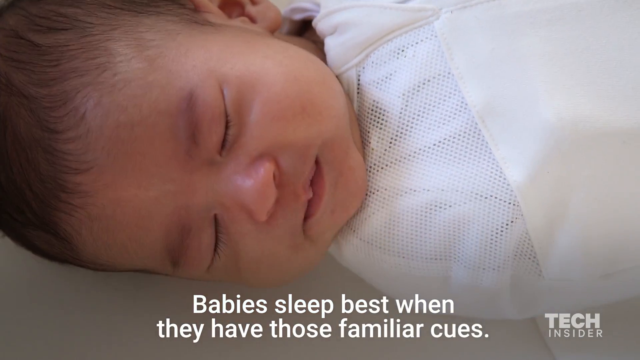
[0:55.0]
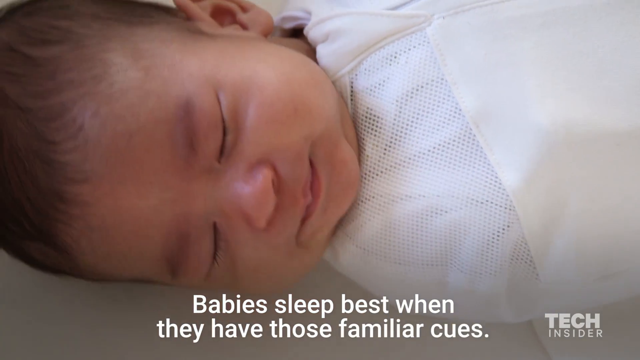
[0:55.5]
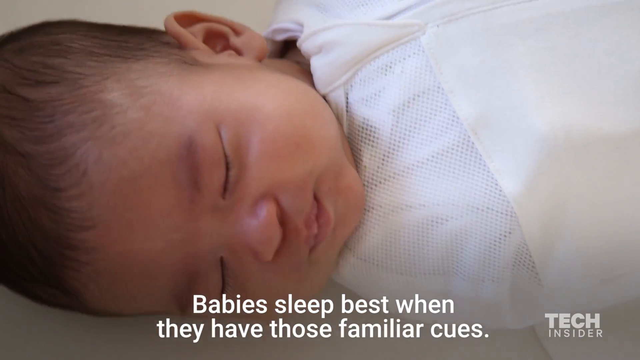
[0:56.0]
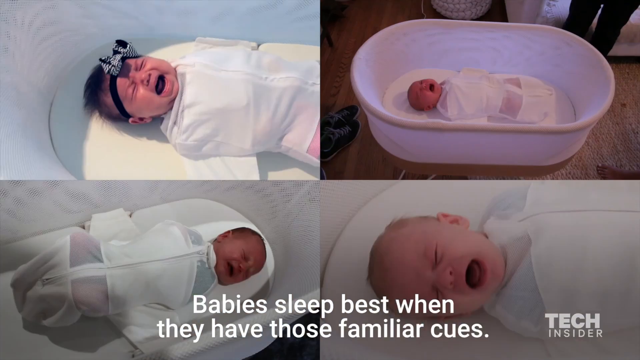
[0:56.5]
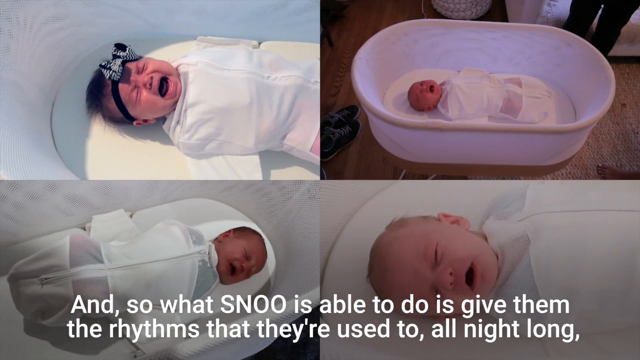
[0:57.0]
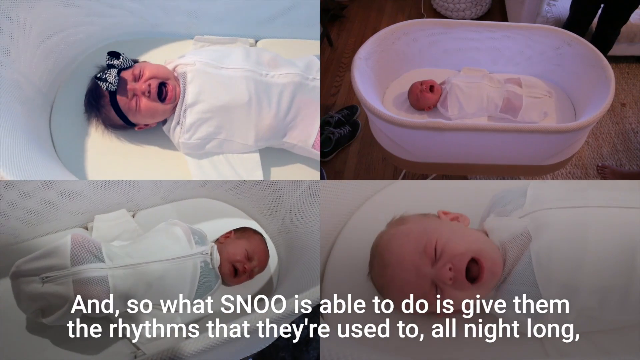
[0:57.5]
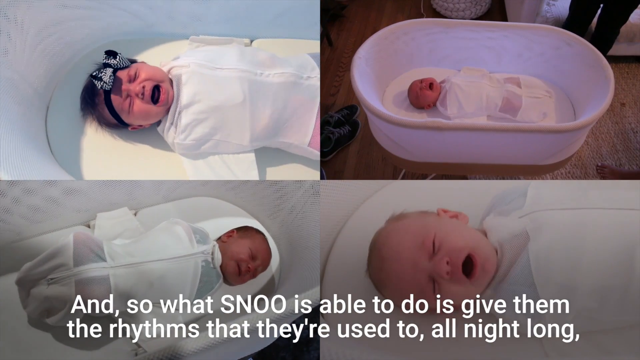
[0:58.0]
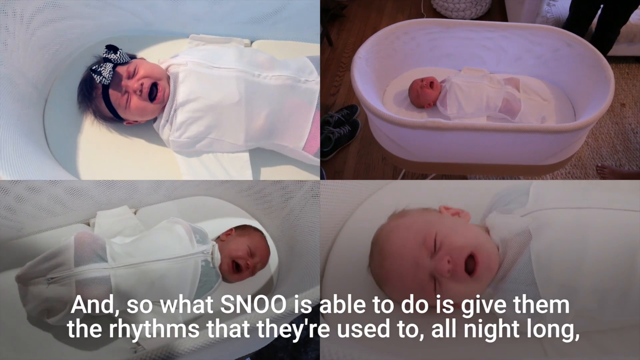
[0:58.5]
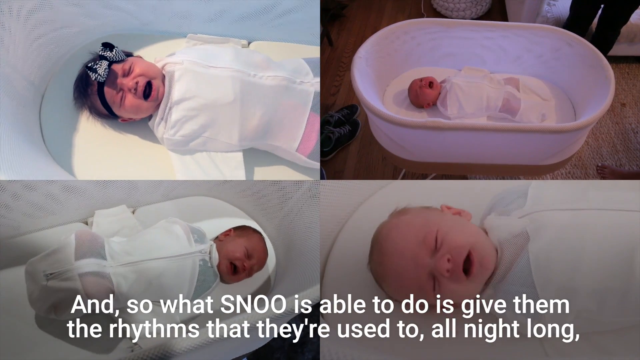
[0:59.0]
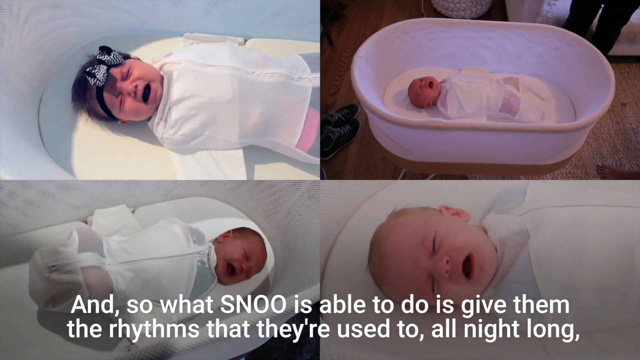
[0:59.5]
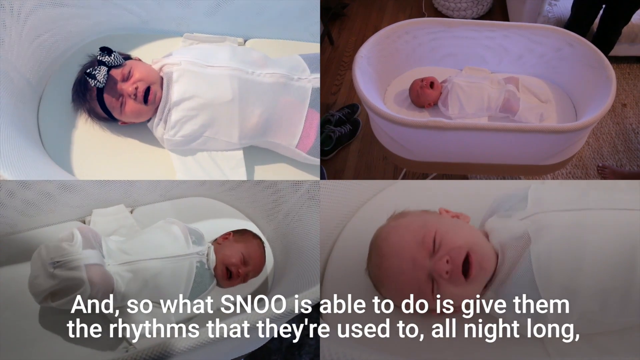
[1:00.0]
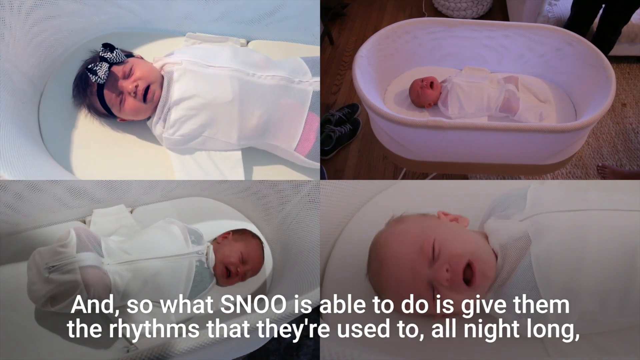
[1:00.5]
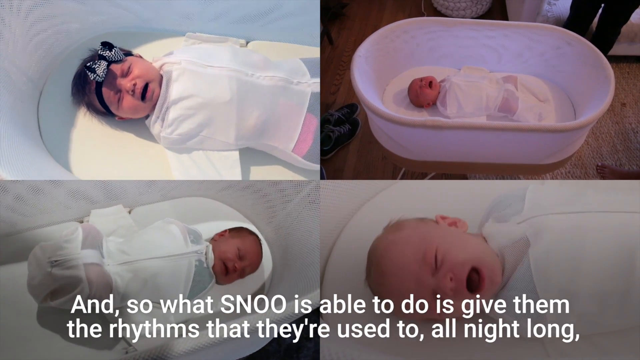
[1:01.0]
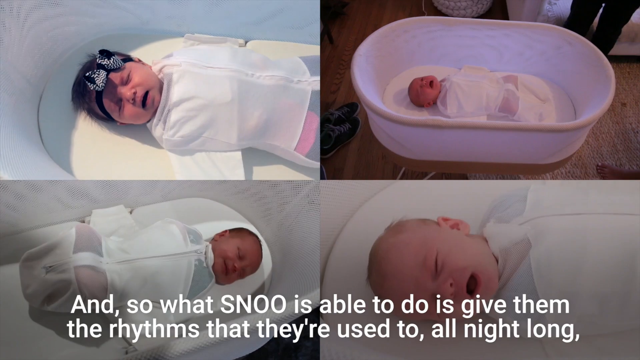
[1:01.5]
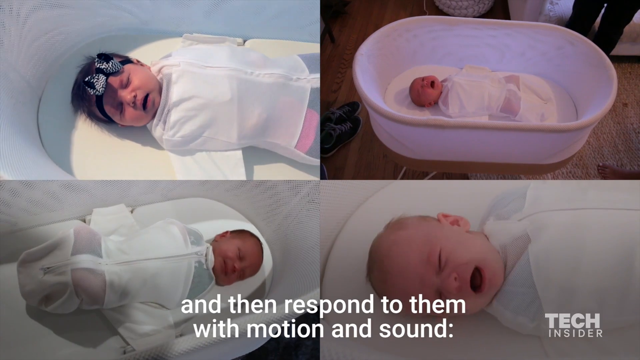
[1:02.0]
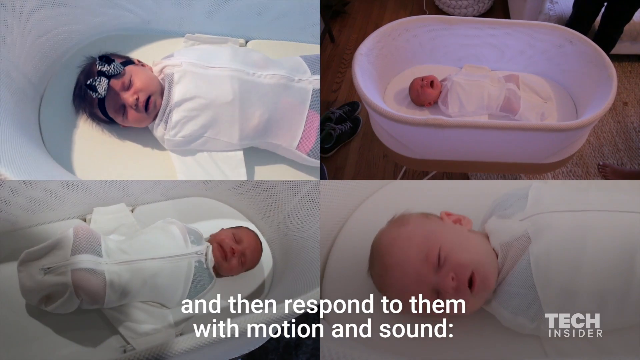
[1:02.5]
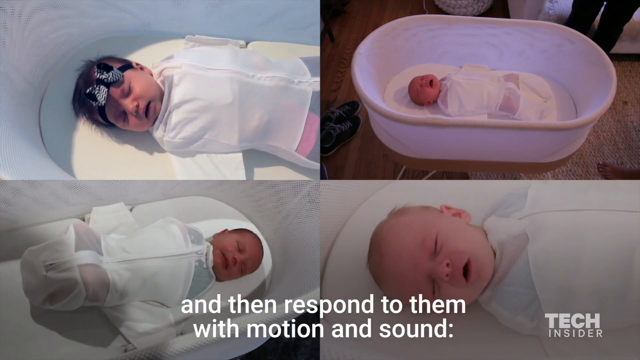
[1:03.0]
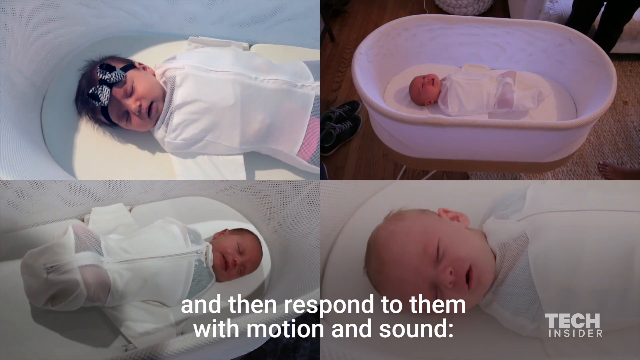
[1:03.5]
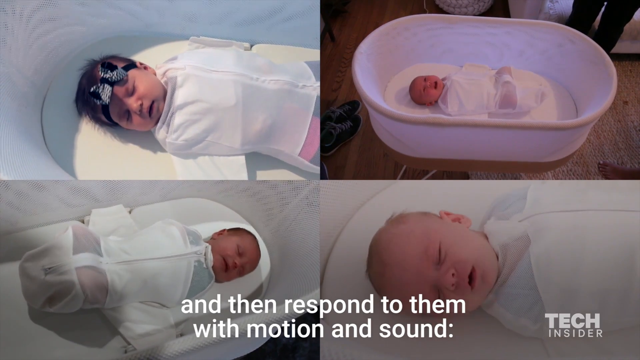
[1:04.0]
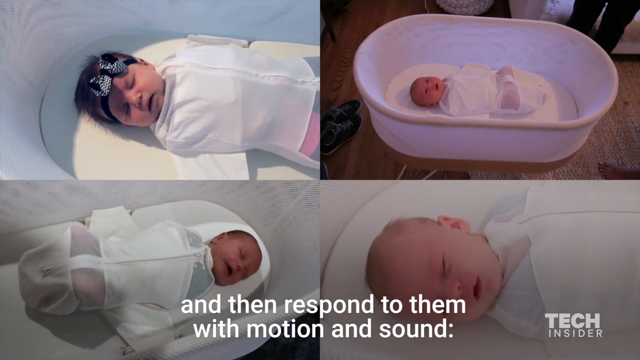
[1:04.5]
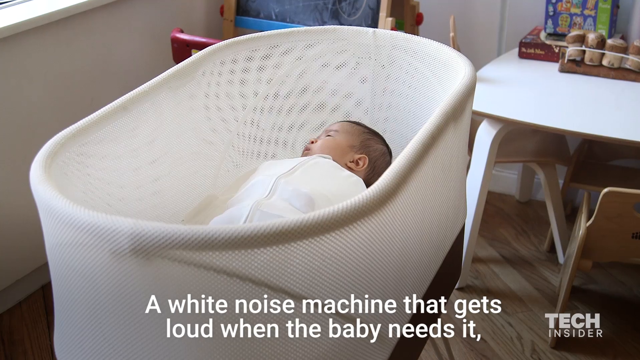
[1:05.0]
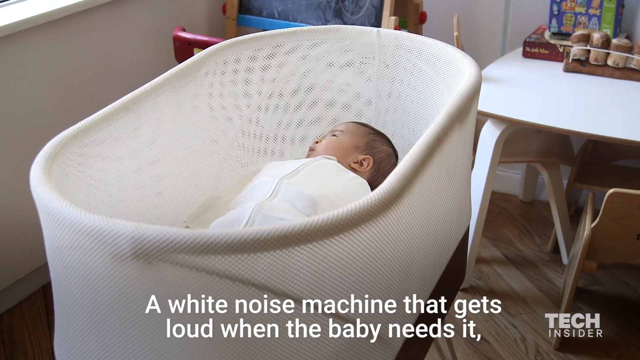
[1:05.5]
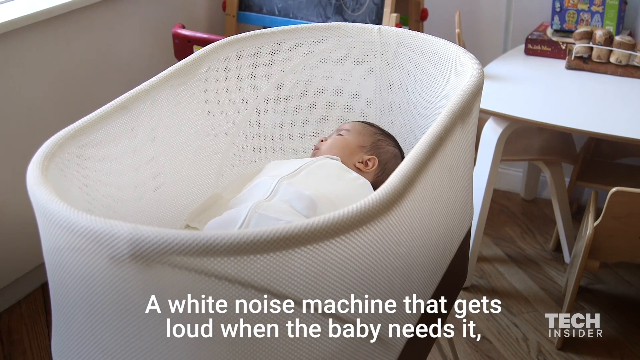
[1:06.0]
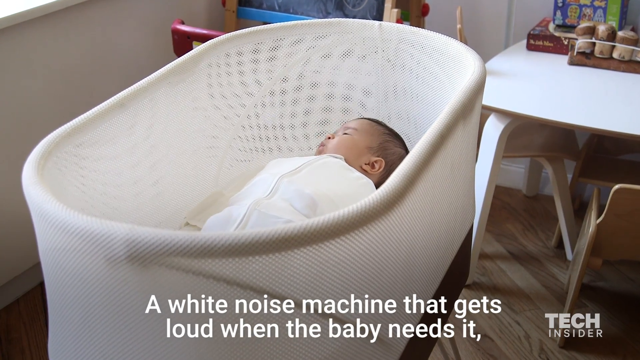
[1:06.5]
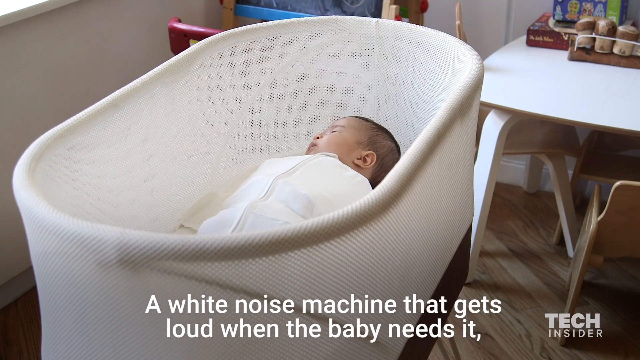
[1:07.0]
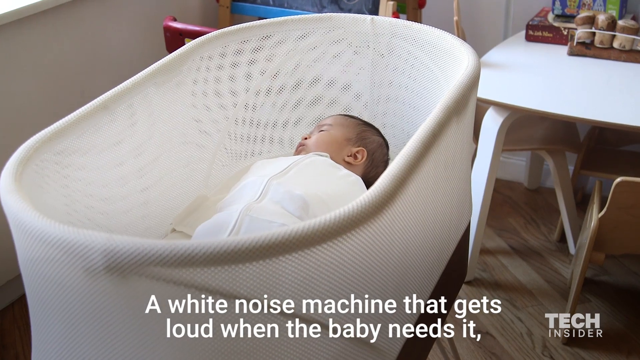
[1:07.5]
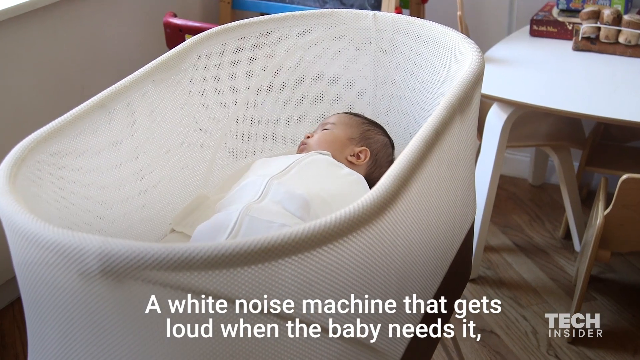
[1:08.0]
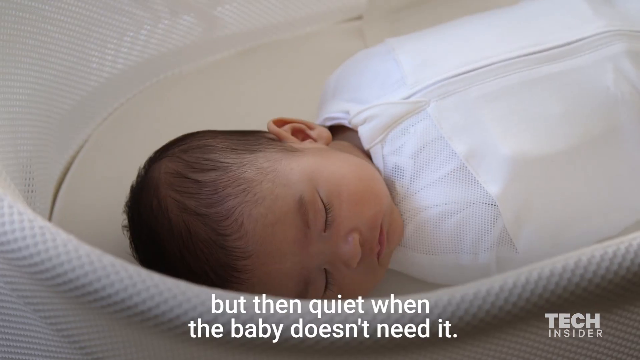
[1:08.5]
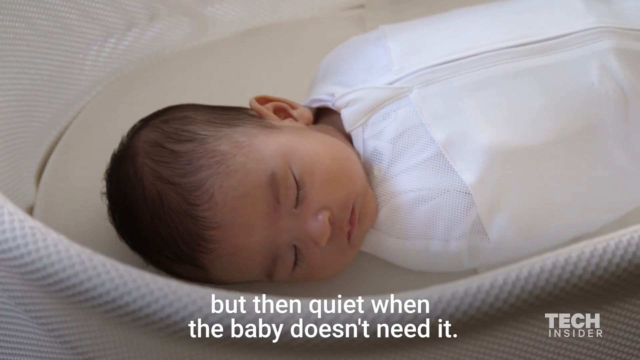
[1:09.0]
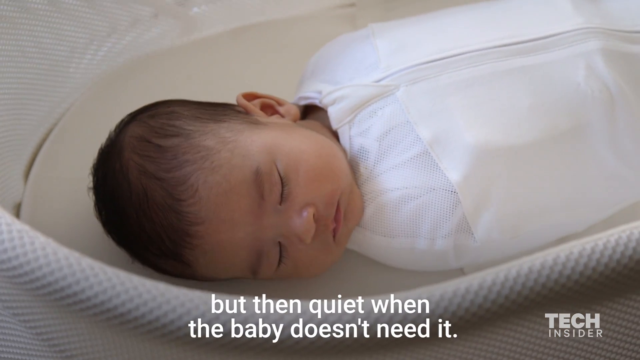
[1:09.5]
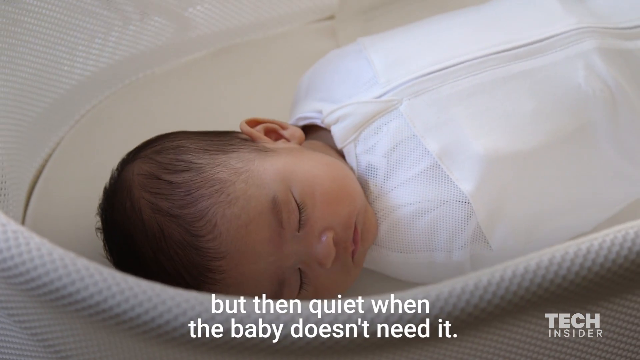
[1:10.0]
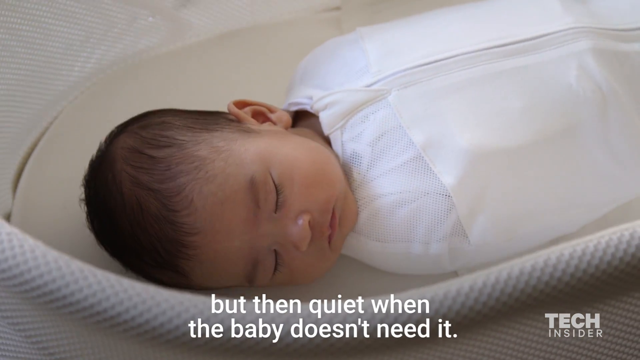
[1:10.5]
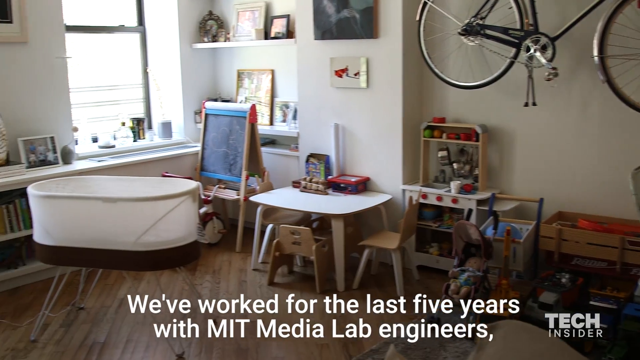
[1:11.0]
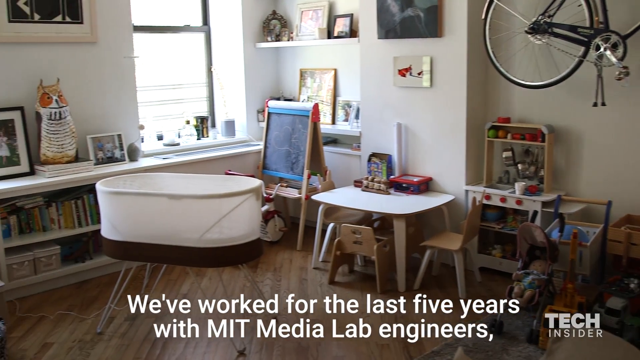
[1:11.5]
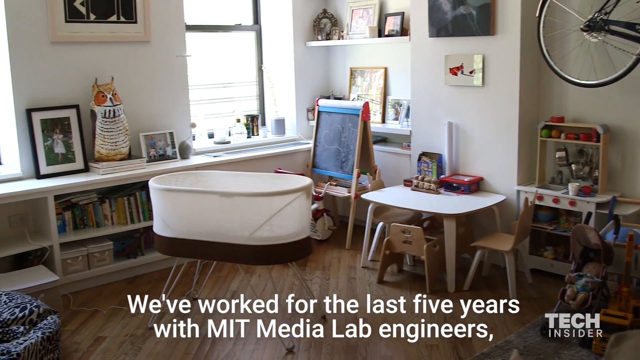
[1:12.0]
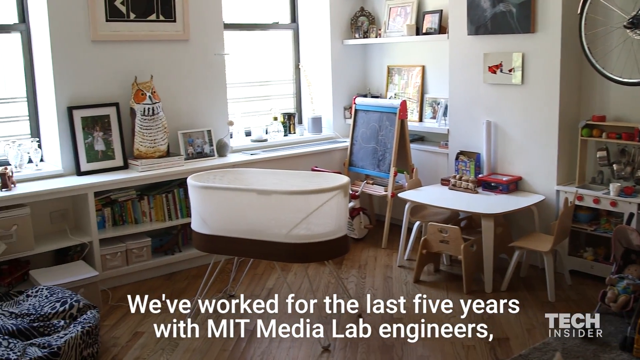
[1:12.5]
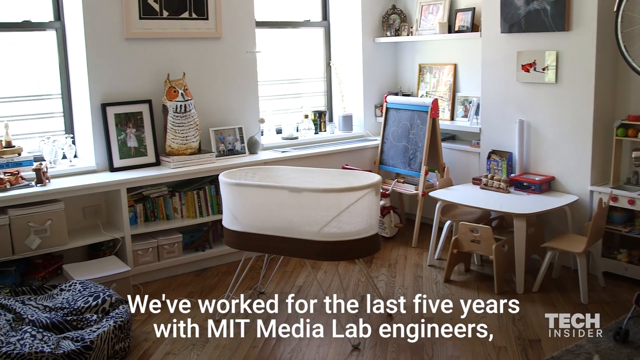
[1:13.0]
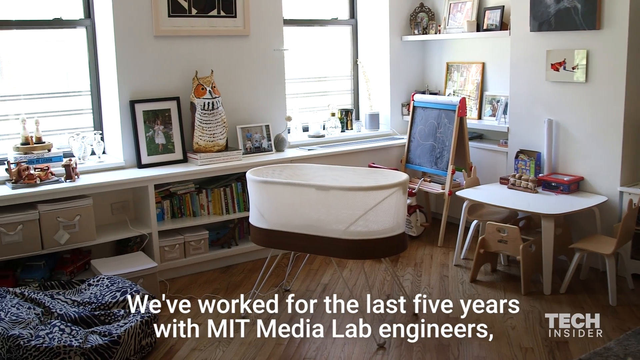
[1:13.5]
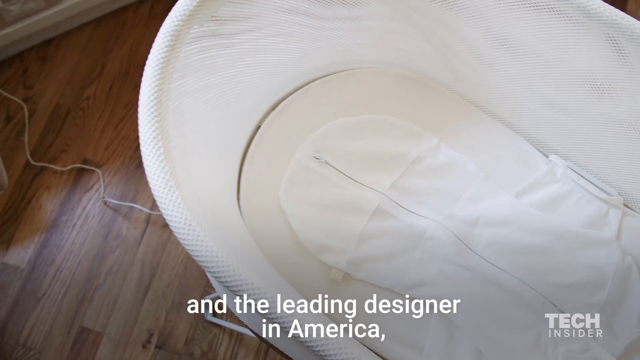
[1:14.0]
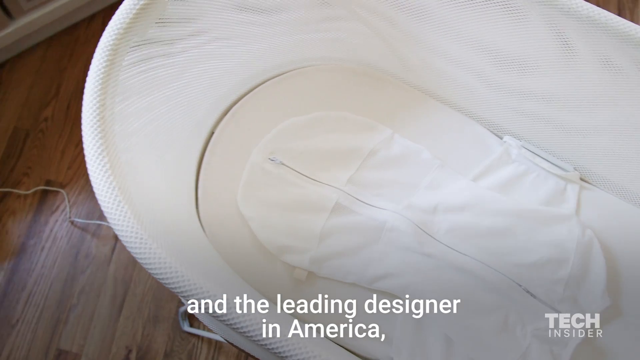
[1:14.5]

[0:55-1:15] The screen is divided into four, showing four different babies at the same time, one in each corner, rocking back and forth and crying. The babies appear to be in slight distress as they rock, and they appear to be of Caucasian descent. The cradle they rock in is white. Narrated text at the bottom of the screen describes what is happening, and a Tech Insider logo is in the bottom right portion of the screen.